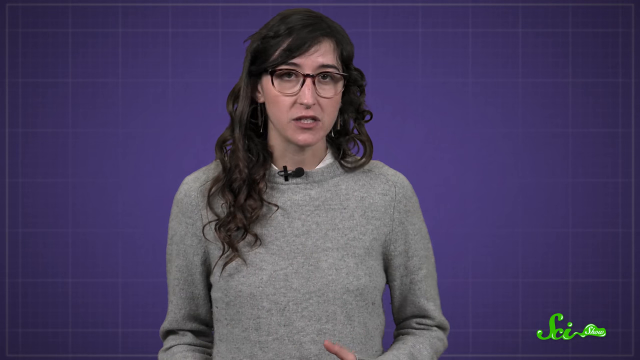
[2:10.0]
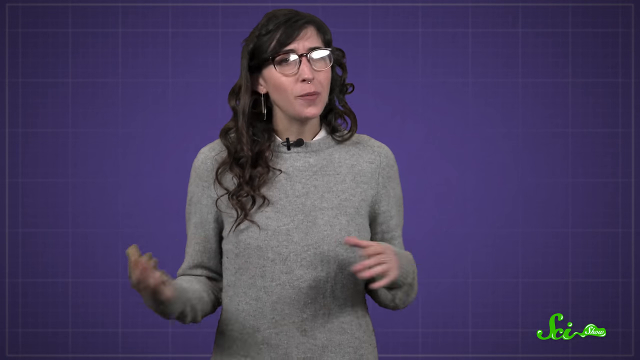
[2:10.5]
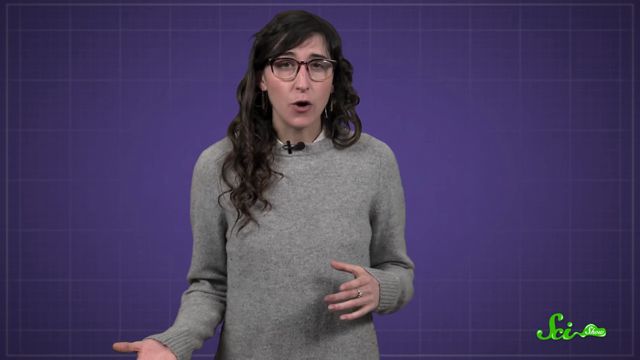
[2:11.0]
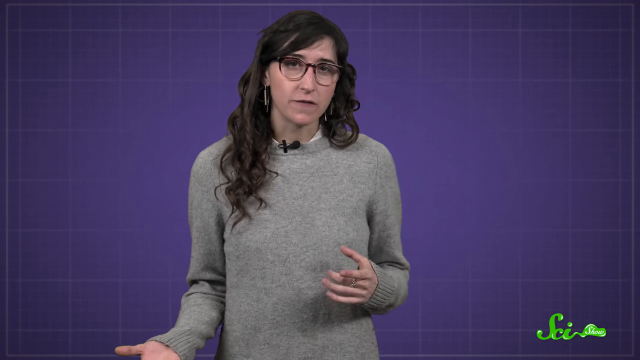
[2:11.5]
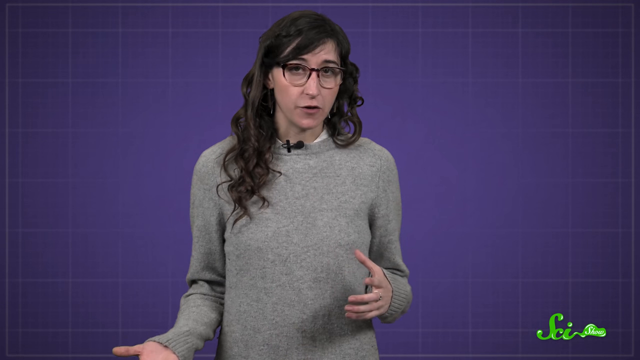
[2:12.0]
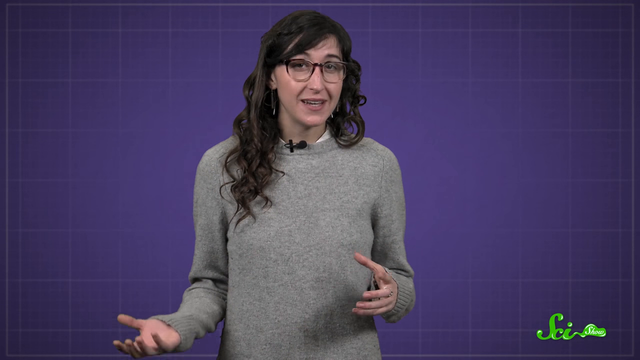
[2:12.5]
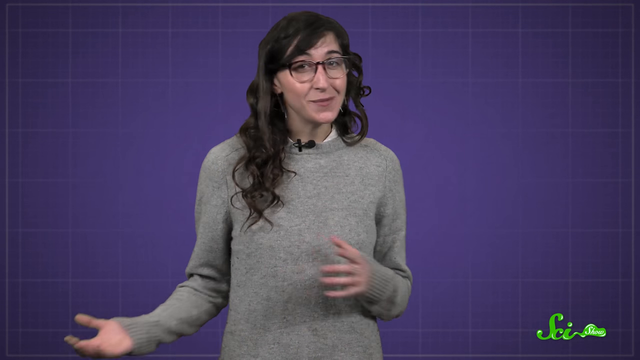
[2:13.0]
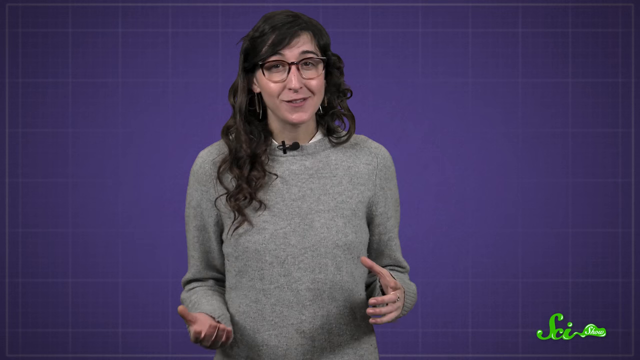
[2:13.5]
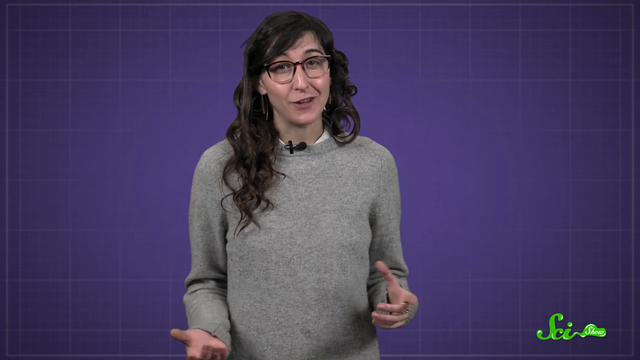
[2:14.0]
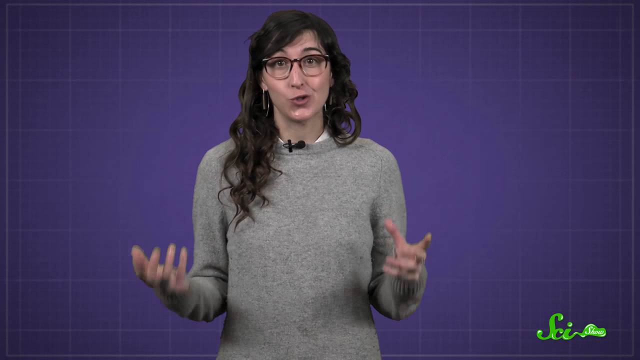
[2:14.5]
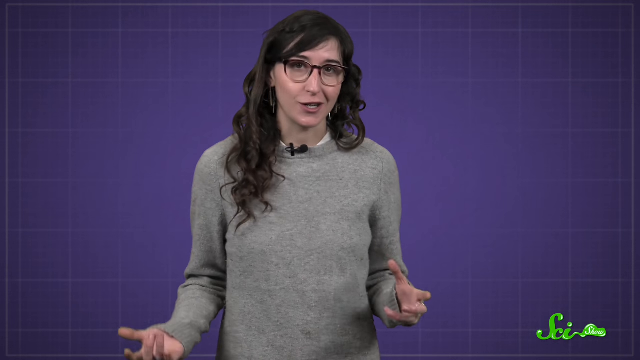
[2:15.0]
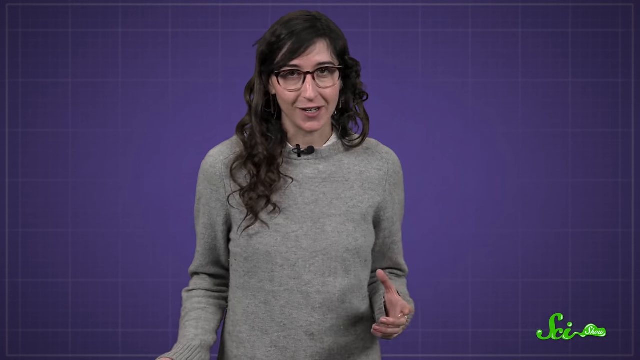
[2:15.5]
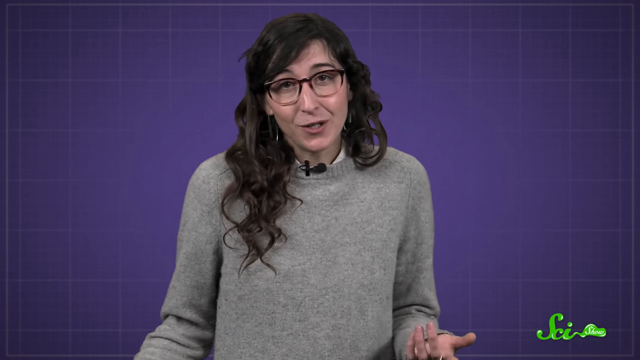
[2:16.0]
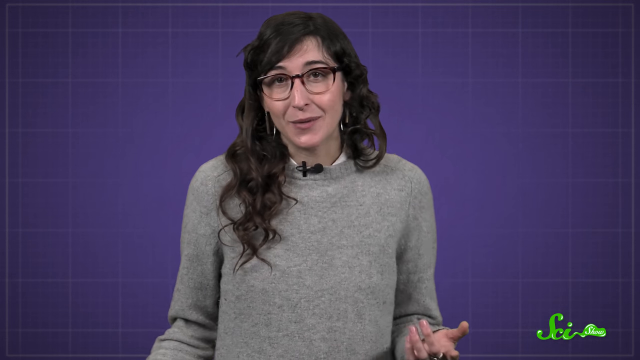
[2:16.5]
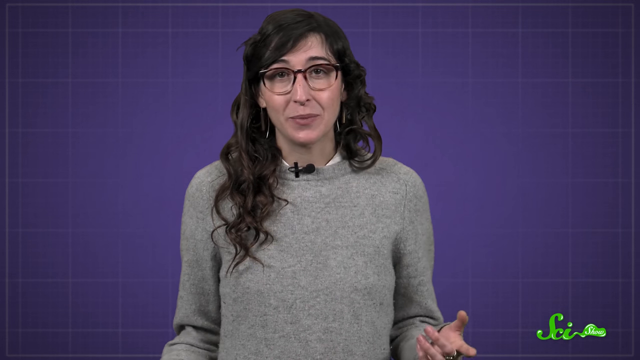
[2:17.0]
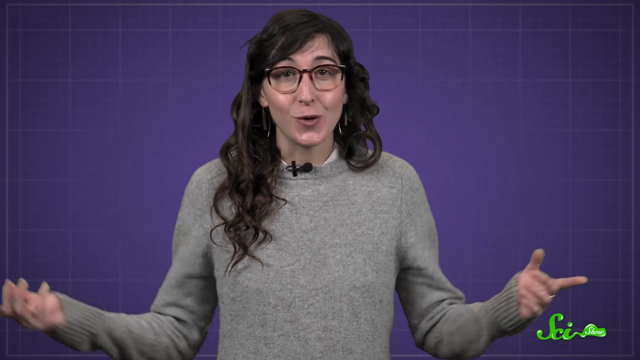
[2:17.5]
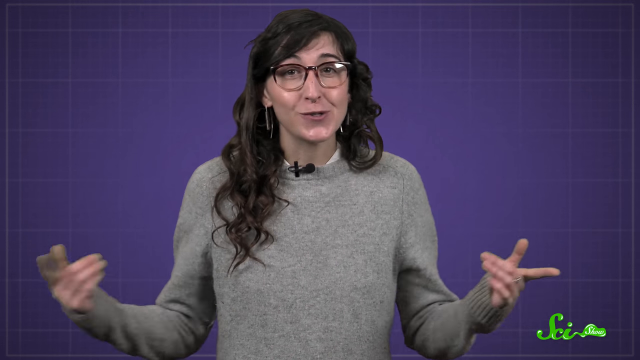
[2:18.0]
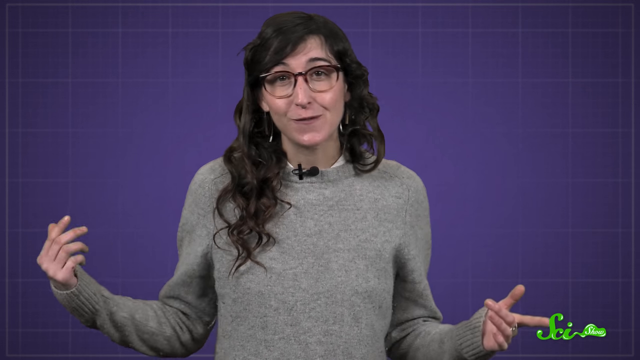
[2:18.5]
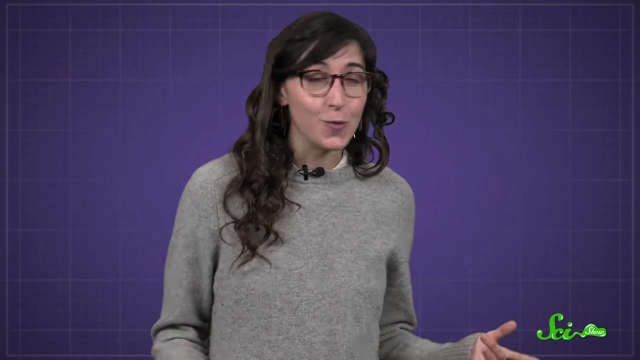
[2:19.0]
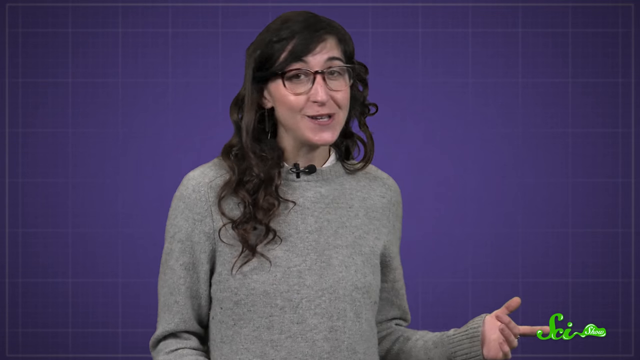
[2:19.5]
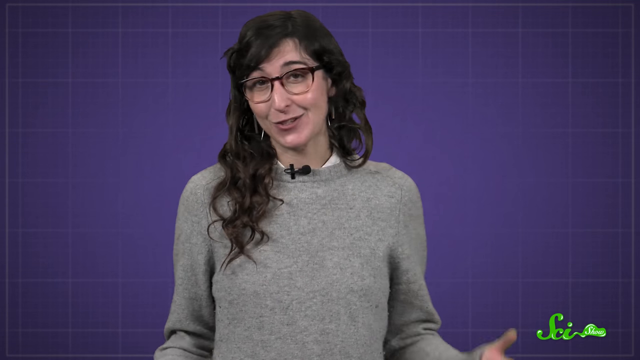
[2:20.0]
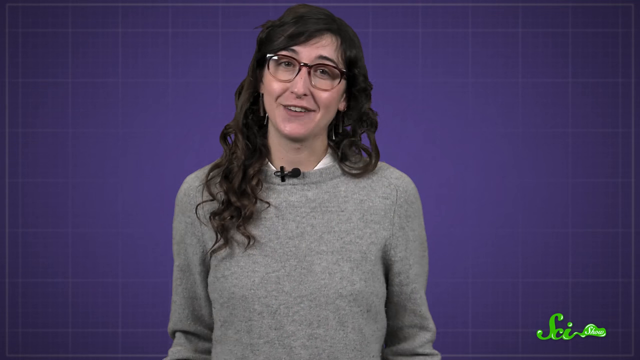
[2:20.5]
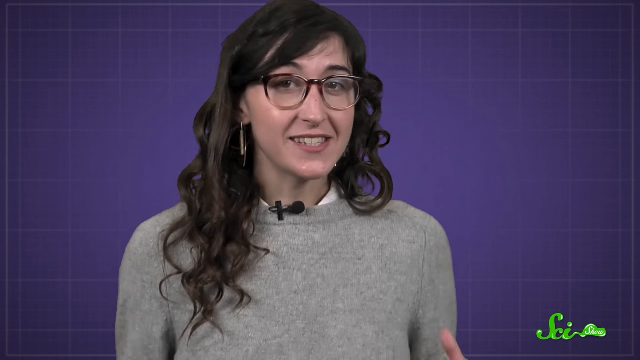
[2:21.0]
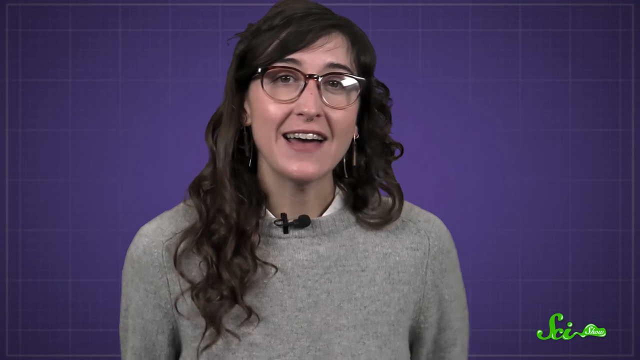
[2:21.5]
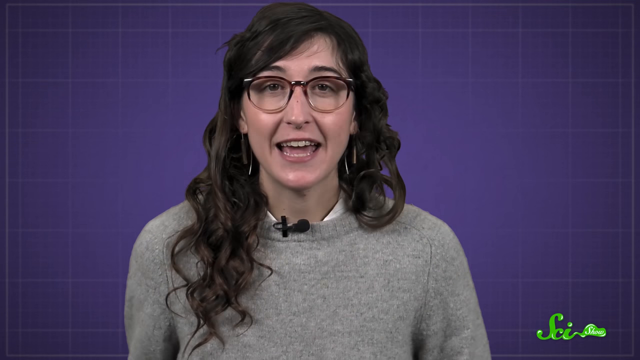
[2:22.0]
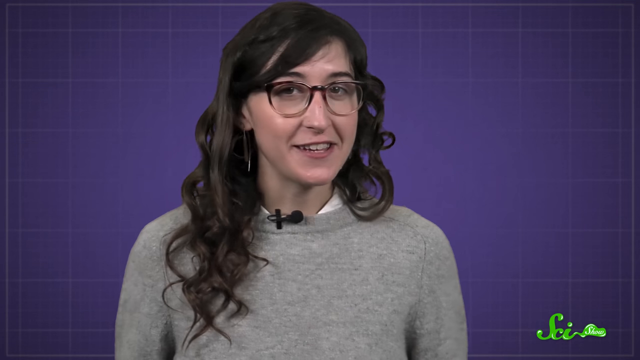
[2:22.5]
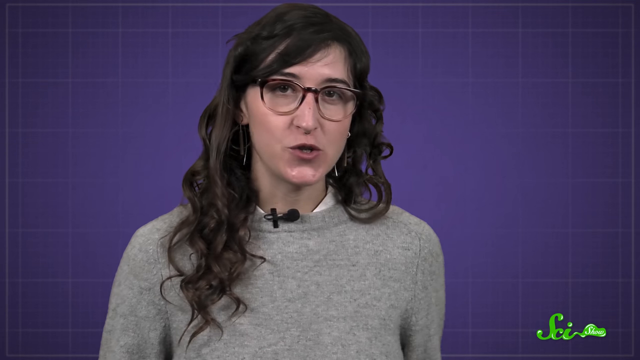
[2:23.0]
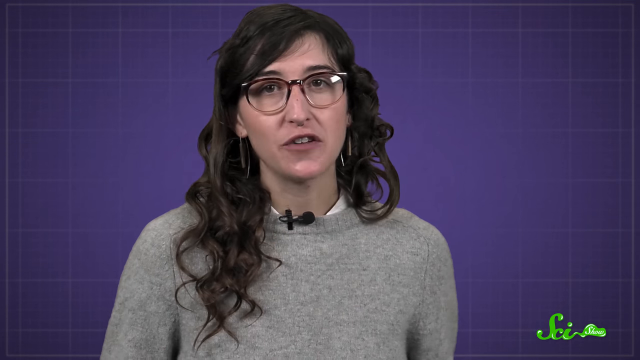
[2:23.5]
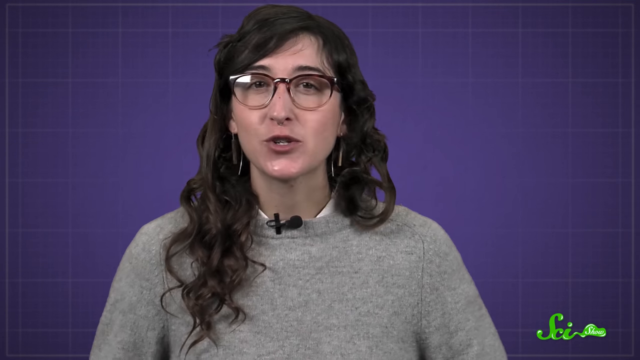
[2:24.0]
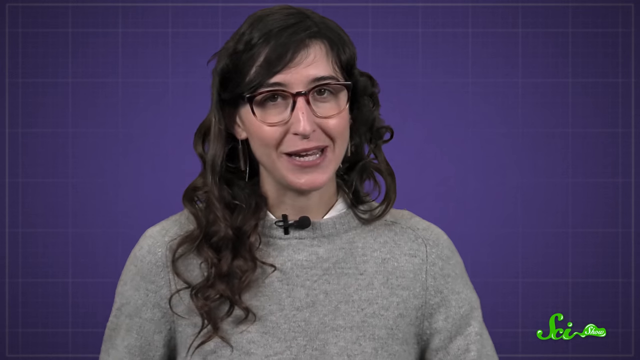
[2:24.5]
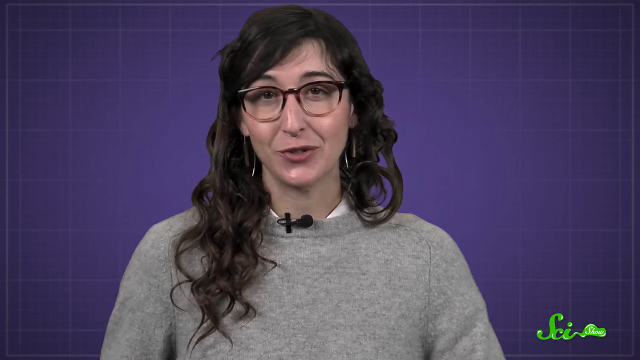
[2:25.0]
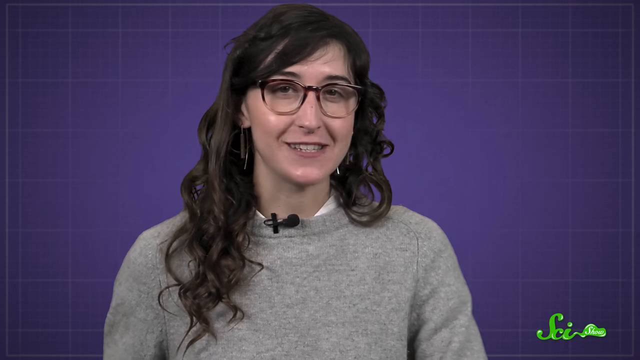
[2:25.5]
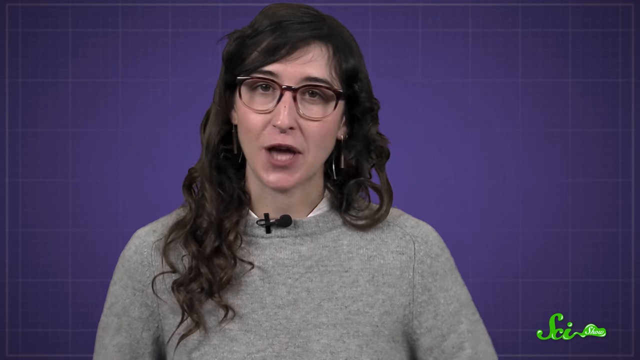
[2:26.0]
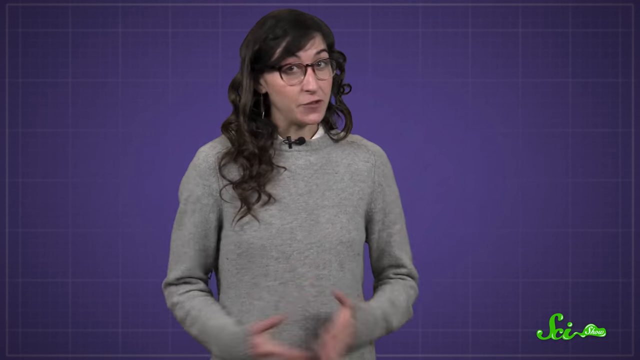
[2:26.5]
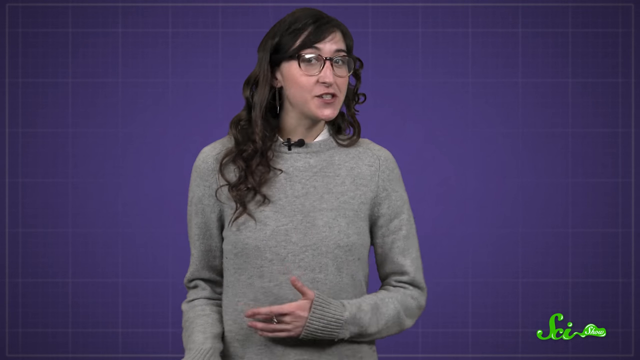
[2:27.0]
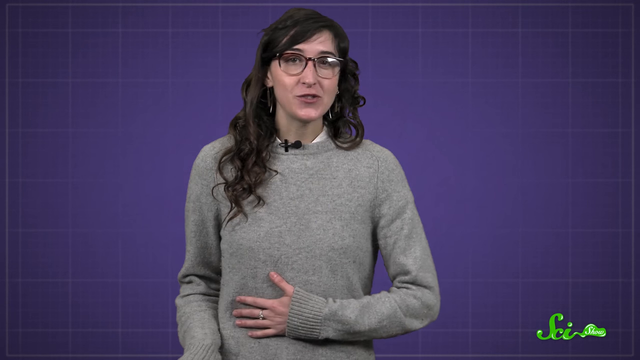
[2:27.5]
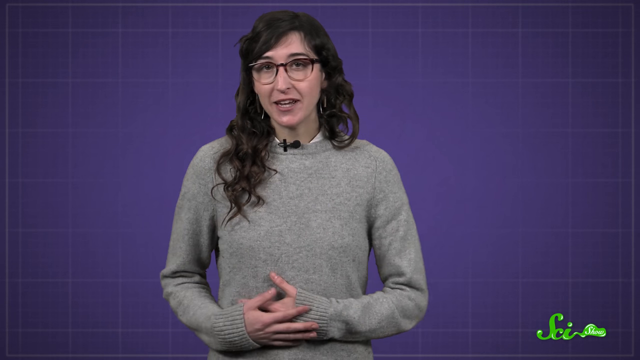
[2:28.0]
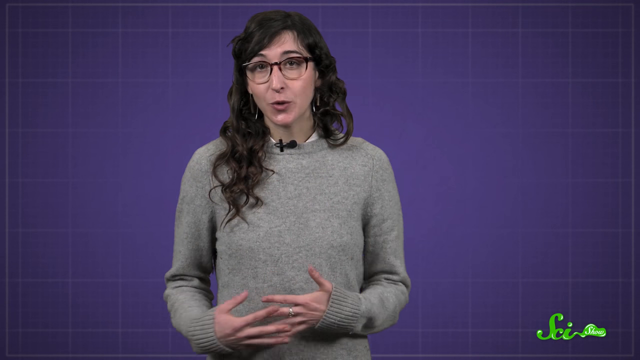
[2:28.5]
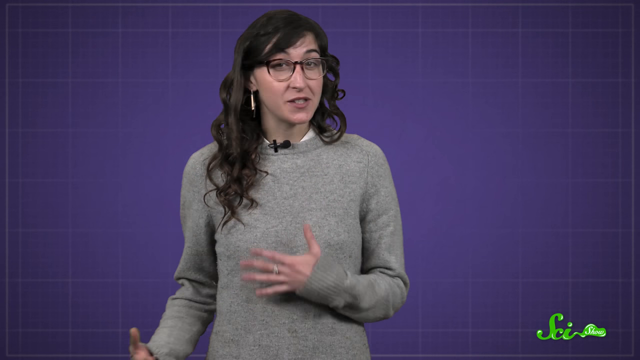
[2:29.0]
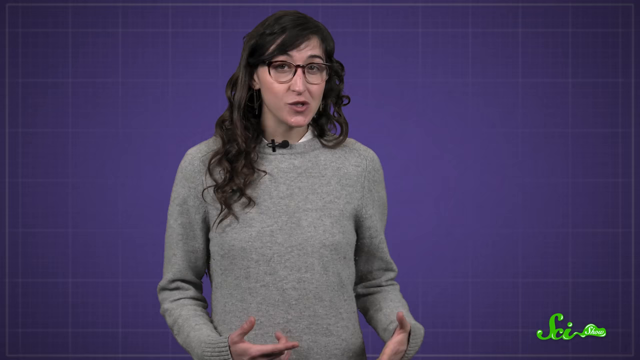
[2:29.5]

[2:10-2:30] The woman is still talking, in front of the purple grid. She has long, dark brown hair, glasses and apparently brown eyes, and wears a white shirt under a long-sleeved tan sweater, with a microphone attached to her sweater collar. She uses her hands as she talks, has an interesting facial expression, and smiles, repeatedly looking at the camera.